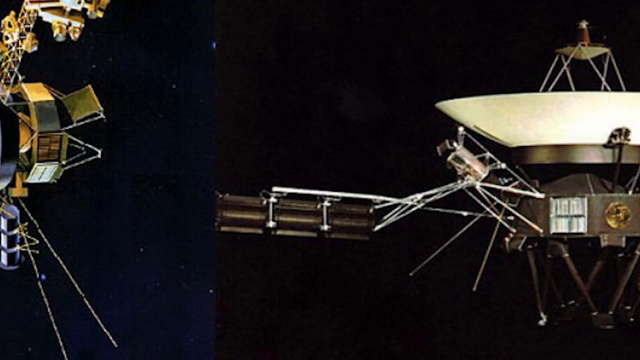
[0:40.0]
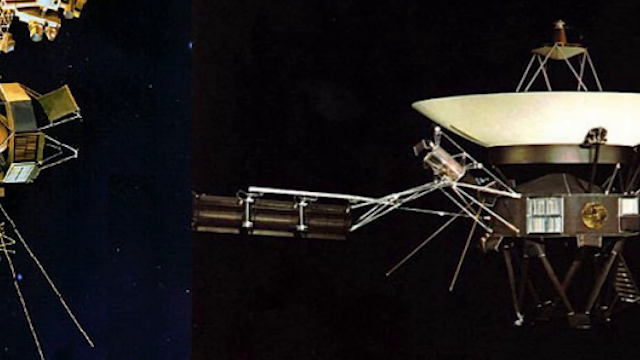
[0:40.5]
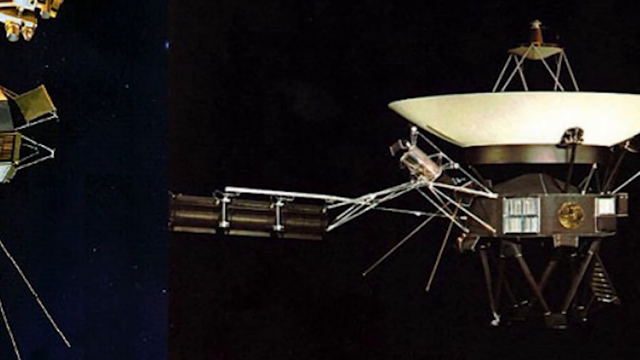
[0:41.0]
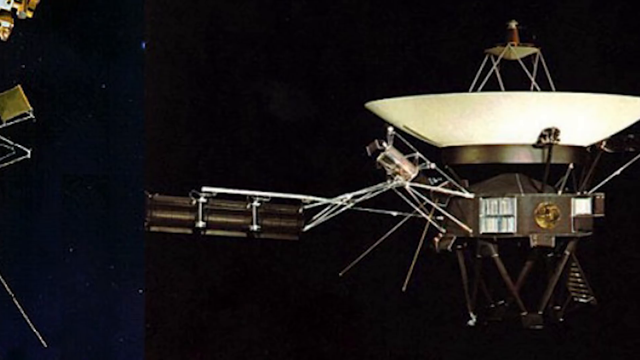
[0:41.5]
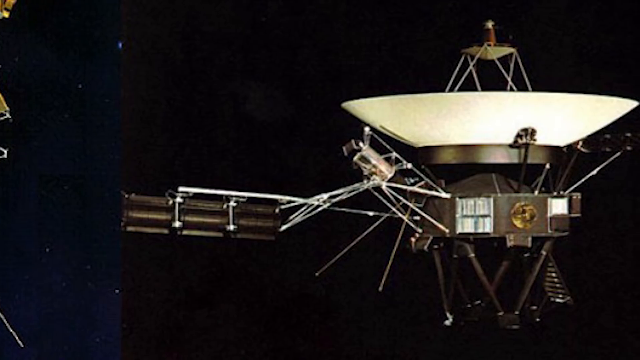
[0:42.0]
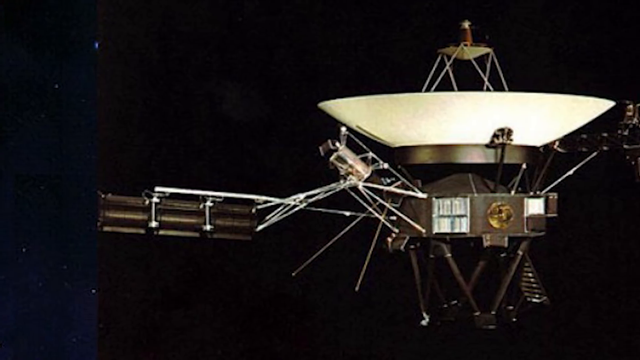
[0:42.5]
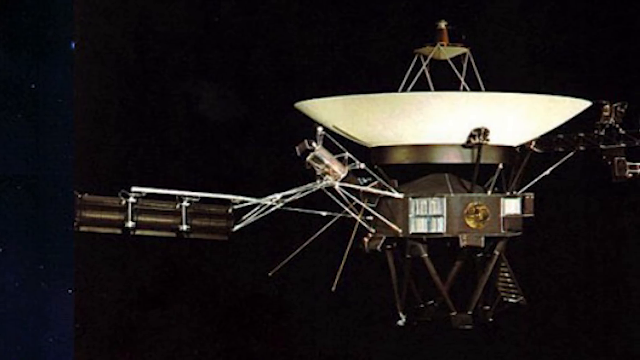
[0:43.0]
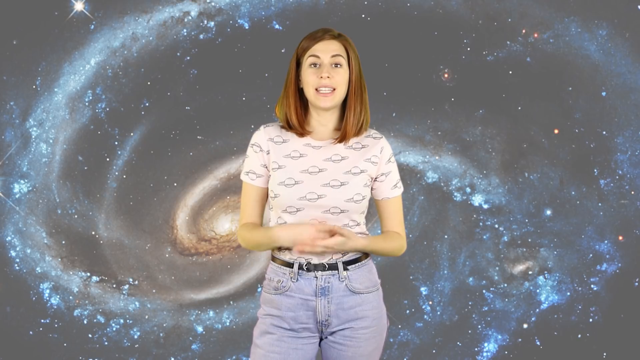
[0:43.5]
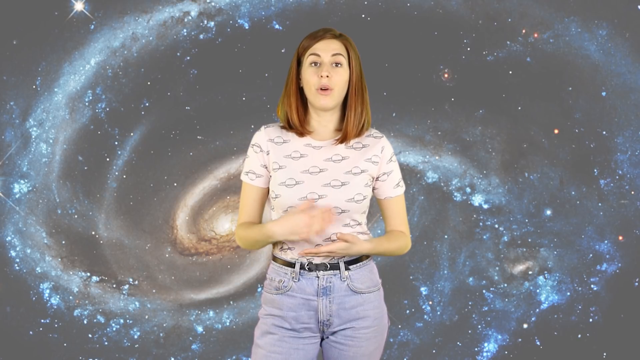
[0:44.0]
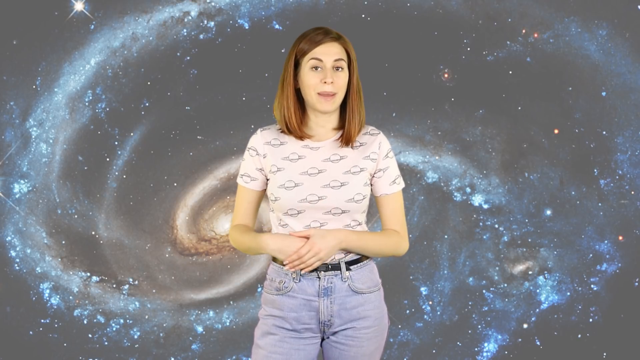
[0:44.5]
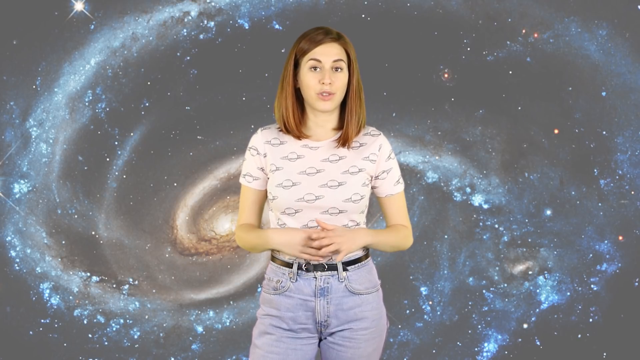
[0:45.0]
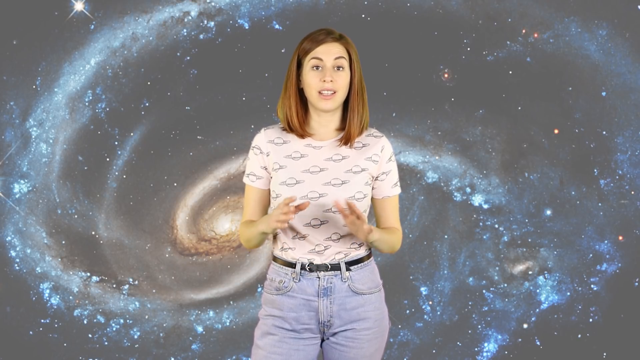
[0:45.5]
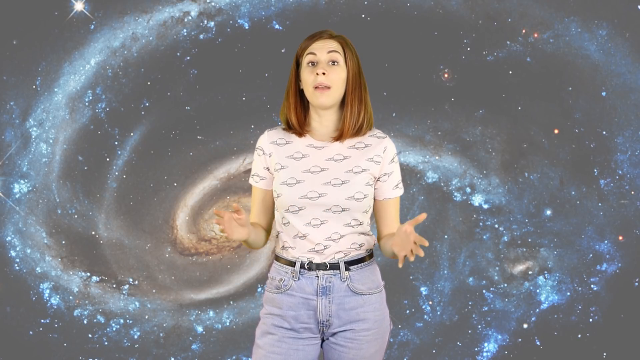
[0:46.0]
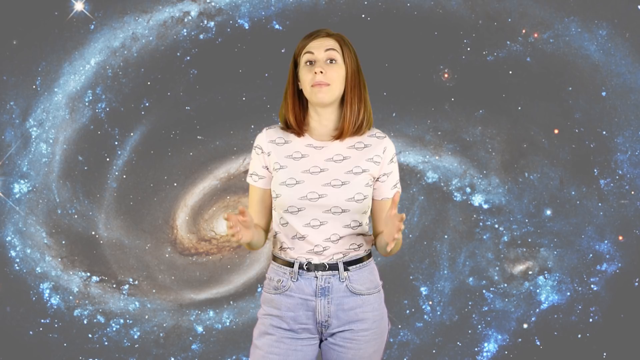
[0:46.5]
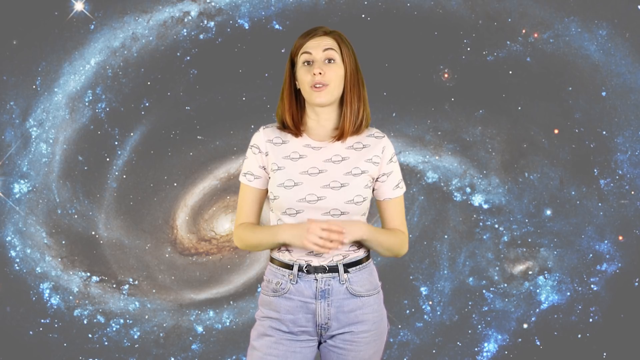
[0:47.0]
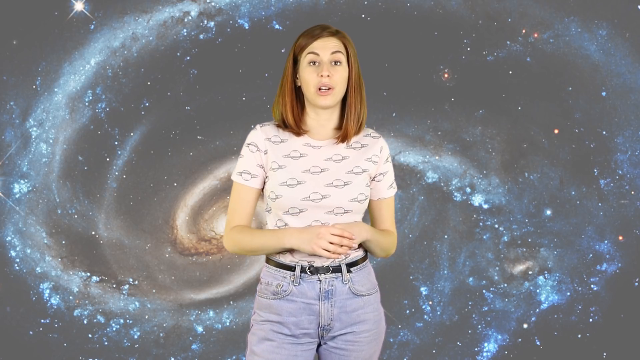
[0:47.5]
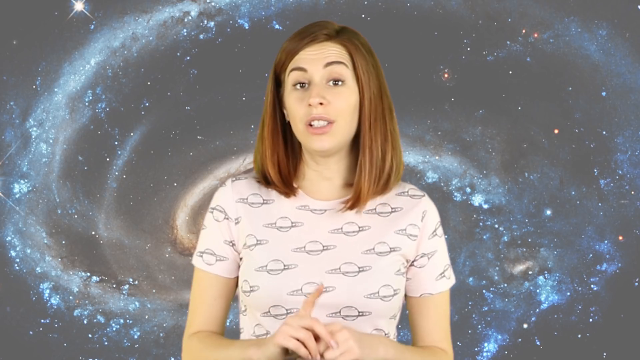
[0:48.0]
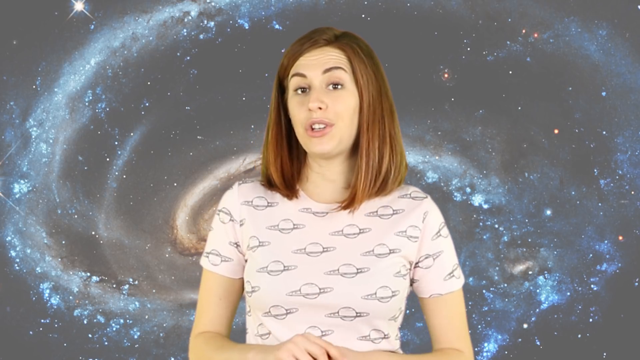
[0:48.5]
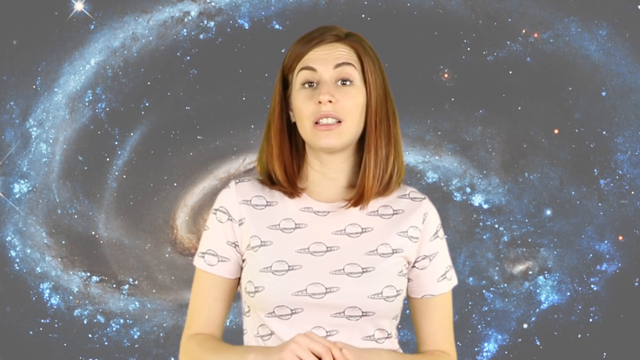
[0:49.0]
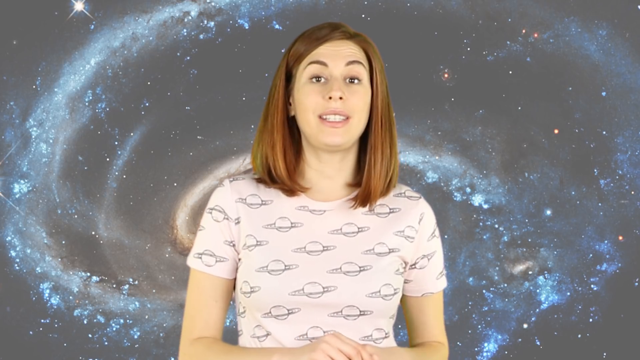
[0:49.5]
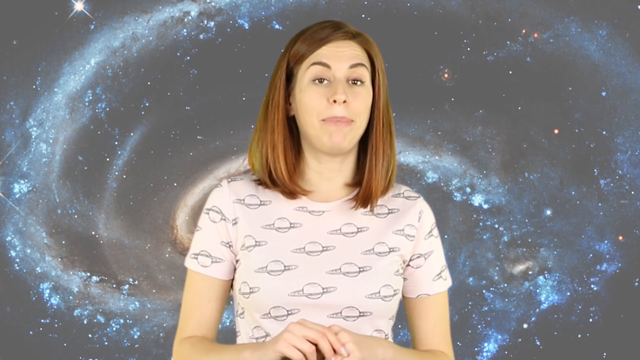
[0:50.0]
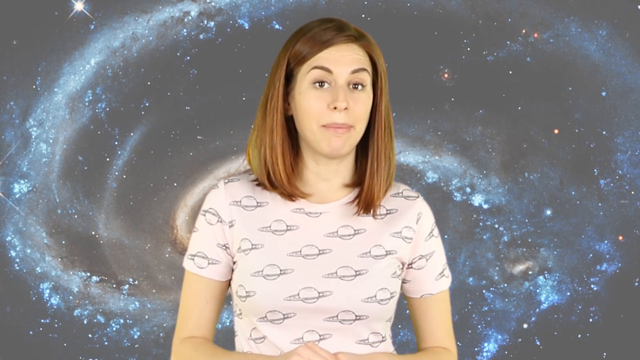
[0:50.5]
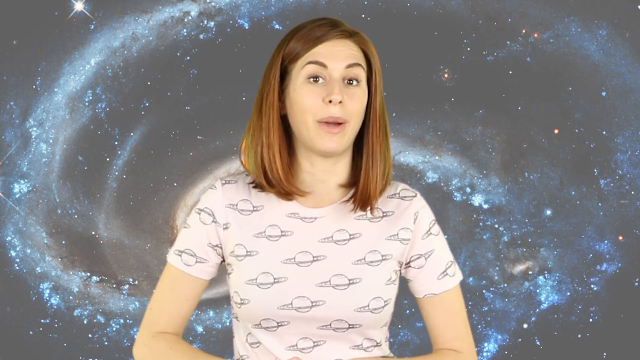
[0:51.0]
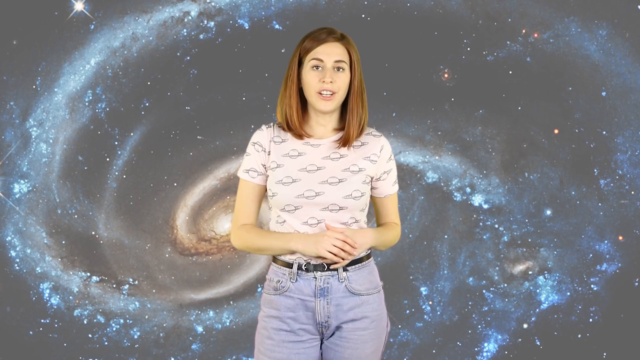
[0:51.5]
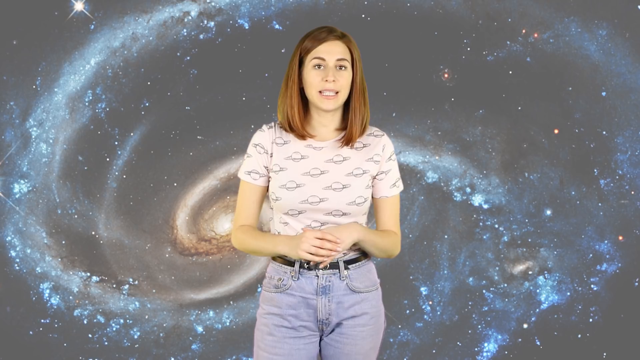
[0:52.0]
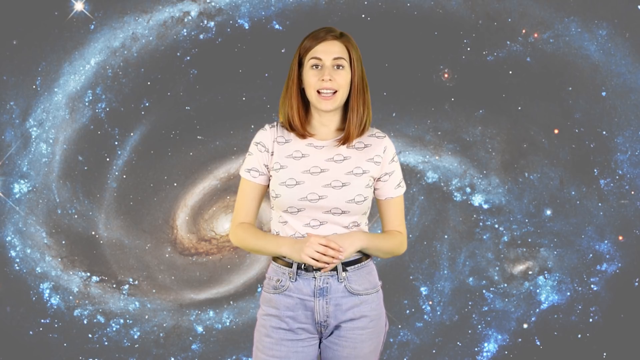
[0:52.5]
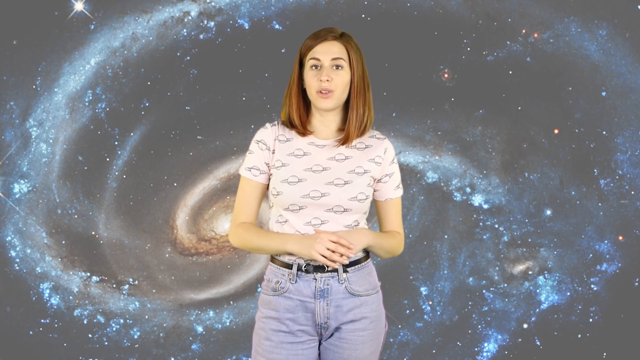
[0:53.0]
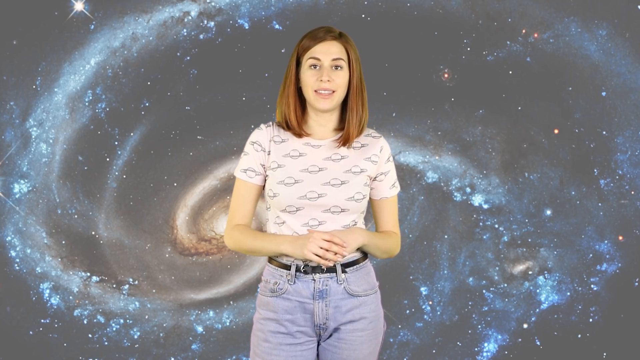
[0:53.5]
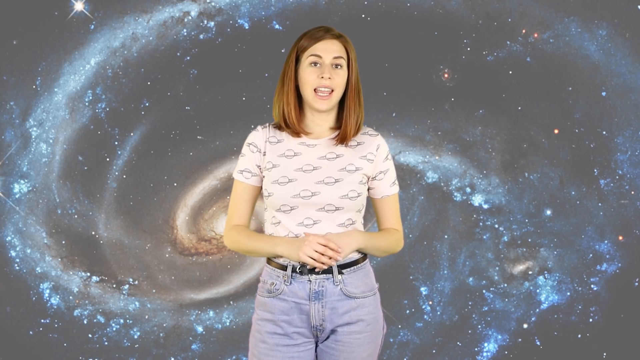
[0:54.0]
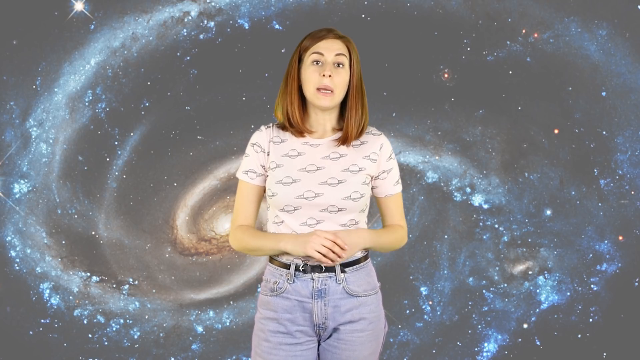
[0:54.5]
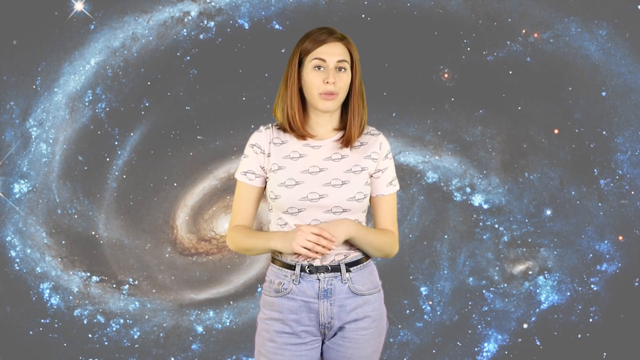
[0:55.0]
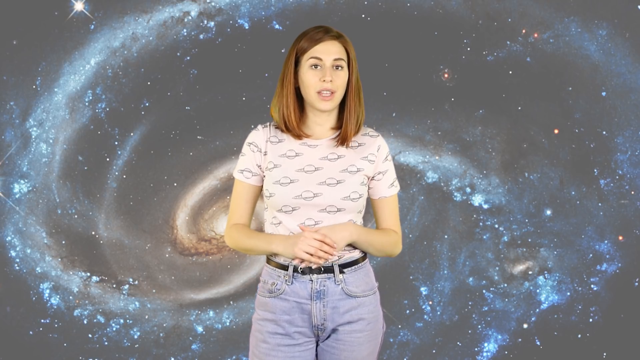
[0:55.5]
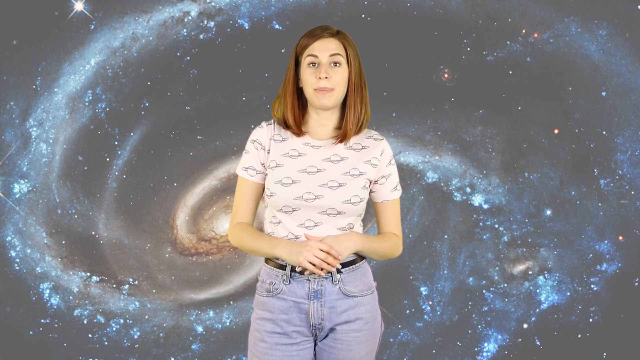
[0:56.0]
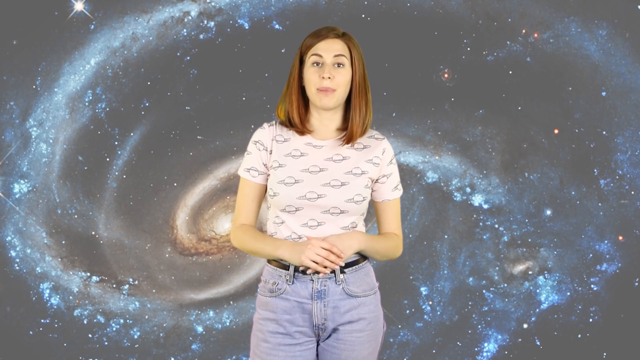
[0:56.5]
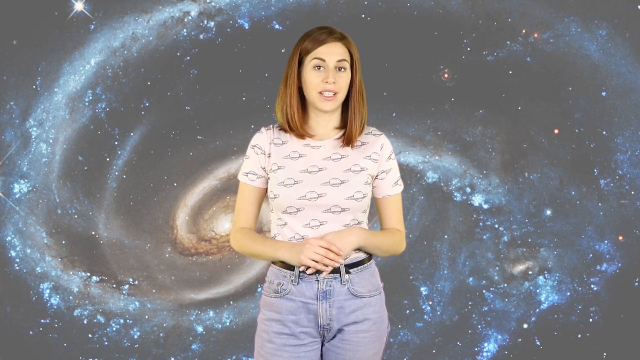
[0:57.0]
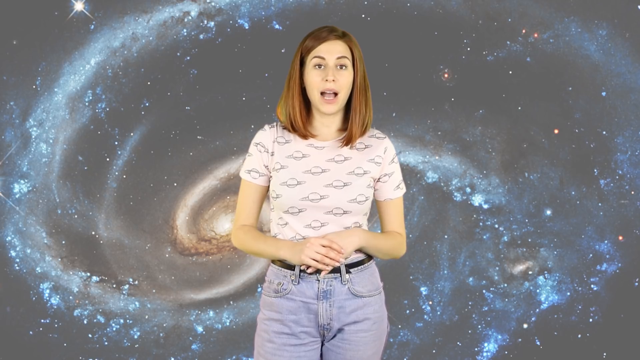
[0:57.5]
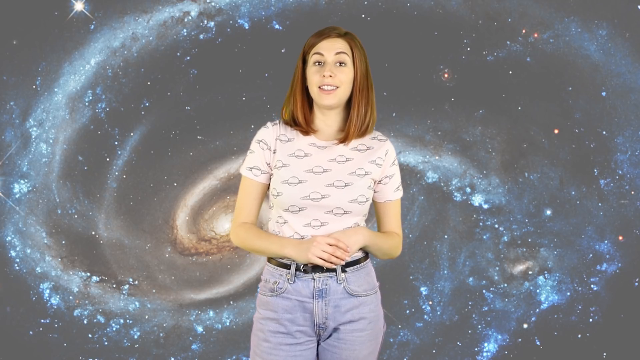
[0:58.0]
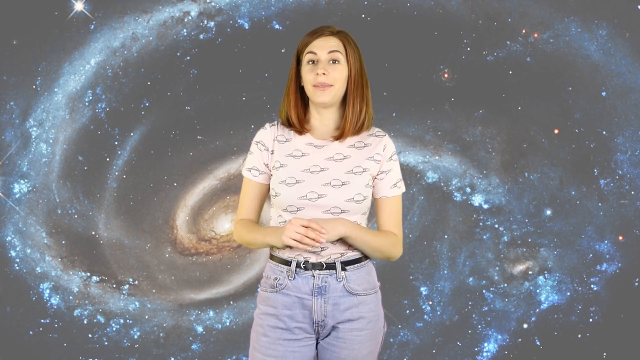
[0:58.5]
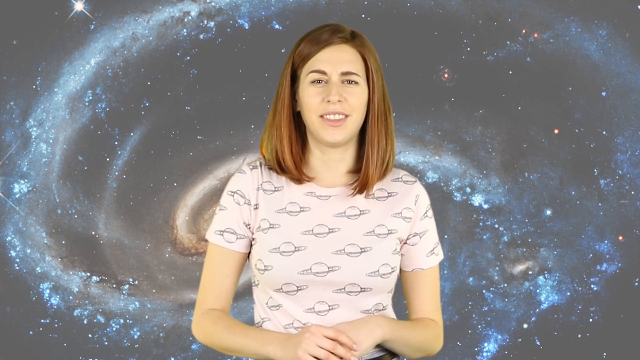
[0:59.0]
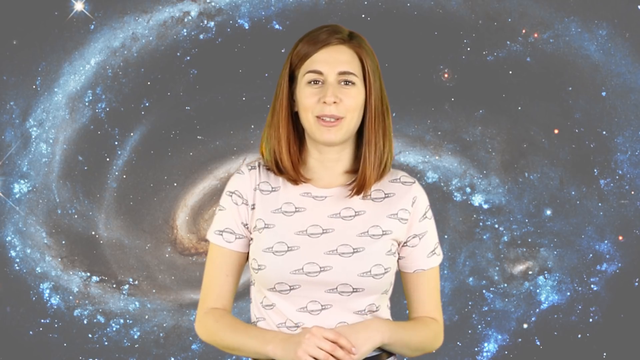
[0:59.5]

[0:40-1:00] The view continues to shift to the right, showing the satellite or spacecraft. The woman appears talking in the middle, facing the viewer with her hands together. The view moves in closer to her as she continues to talk; she has light brown hair. The view zooms away, and she speaks with her hands together, then the view zooms in. She stands in the center the whole time. The background is a picture of a swirling galaxy with a lot of stars and a big swirl in the center; the picture is very faded, very light in color, and foggy-looking. She wears a white t-shirt with images of the planet Saturn drawn in black outline, a thin dark belt that looks dark brown, and light blue jeans.